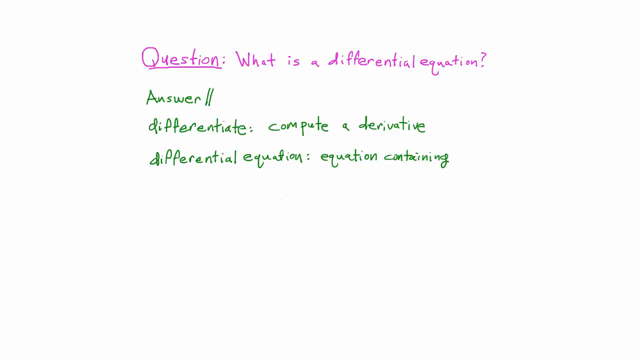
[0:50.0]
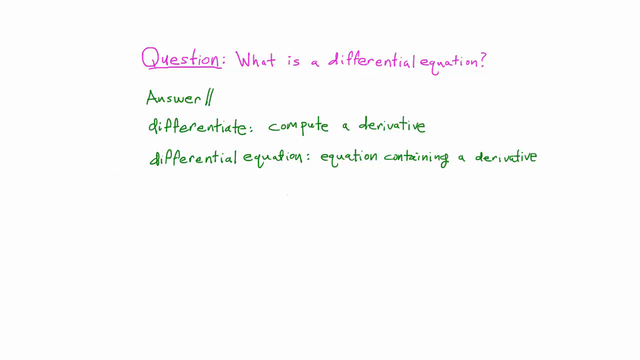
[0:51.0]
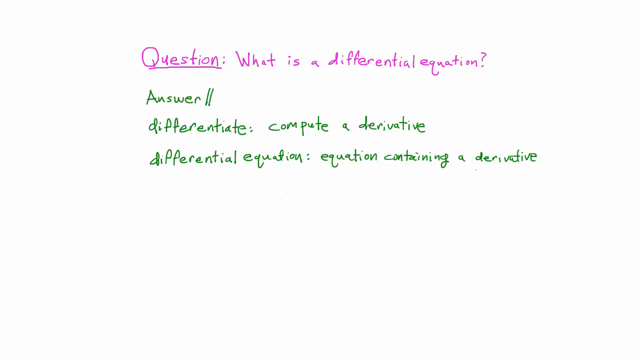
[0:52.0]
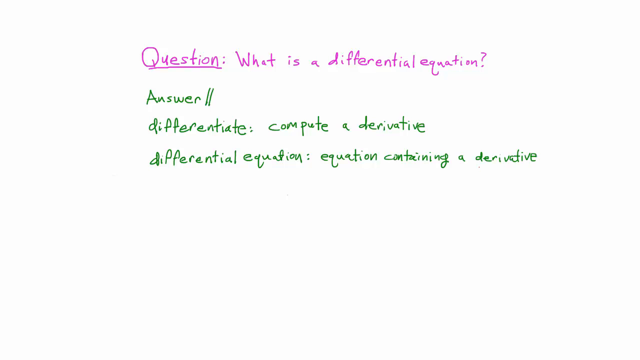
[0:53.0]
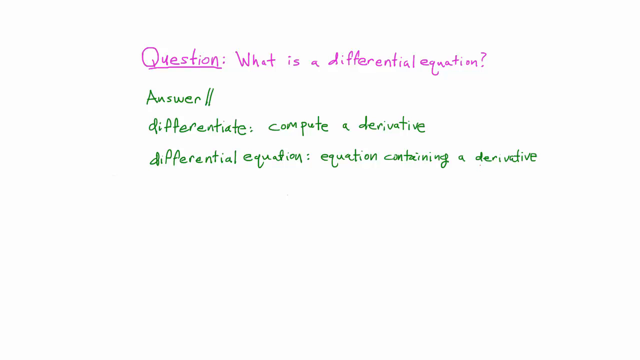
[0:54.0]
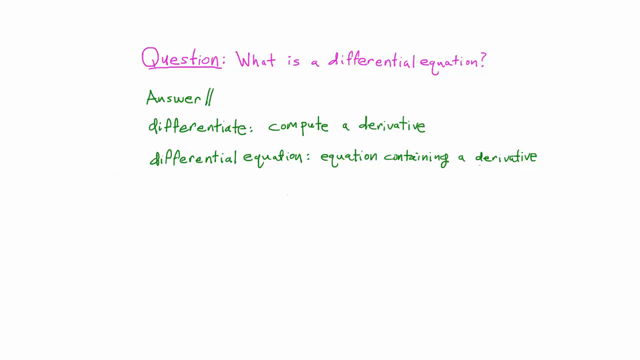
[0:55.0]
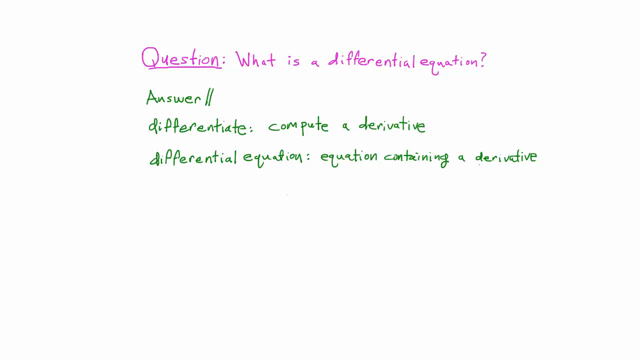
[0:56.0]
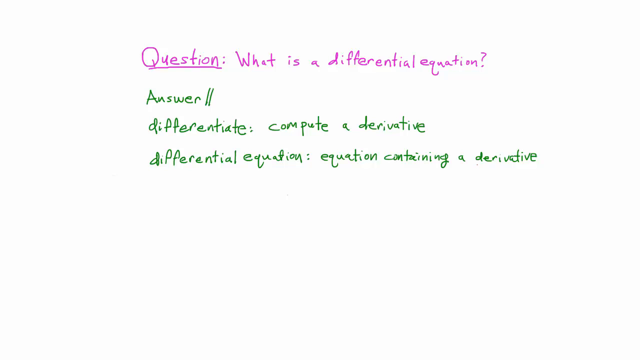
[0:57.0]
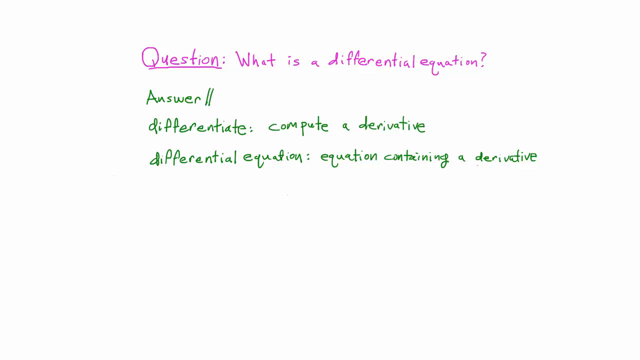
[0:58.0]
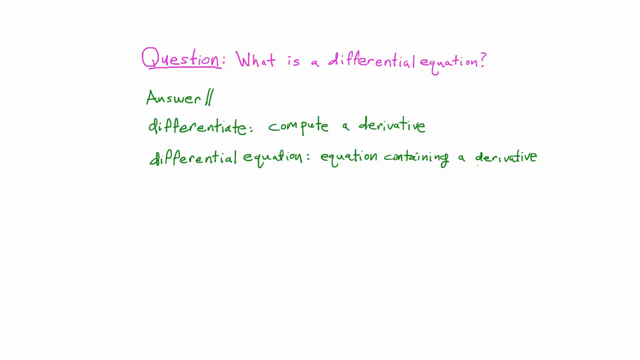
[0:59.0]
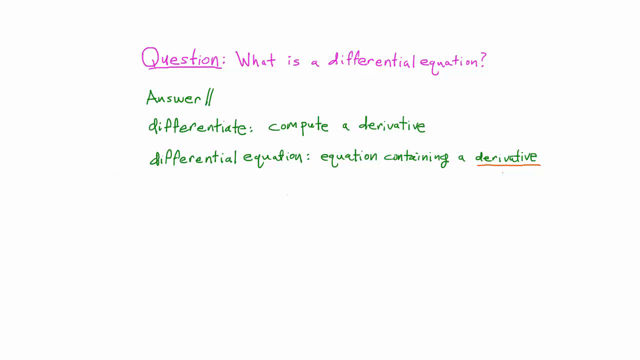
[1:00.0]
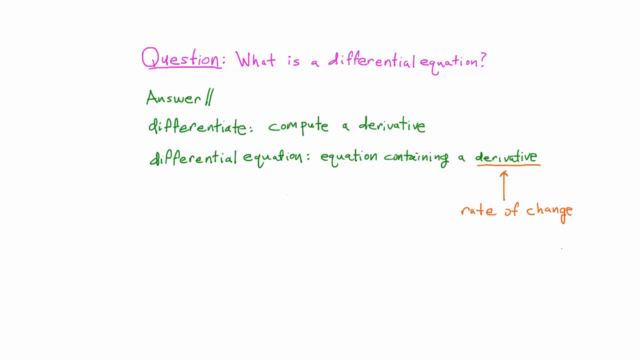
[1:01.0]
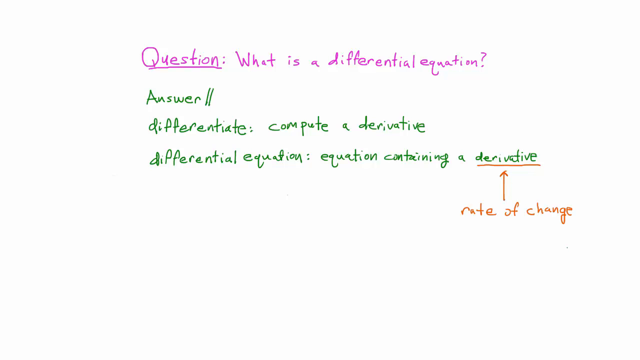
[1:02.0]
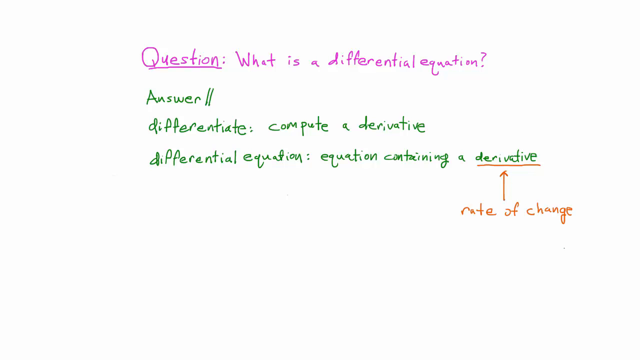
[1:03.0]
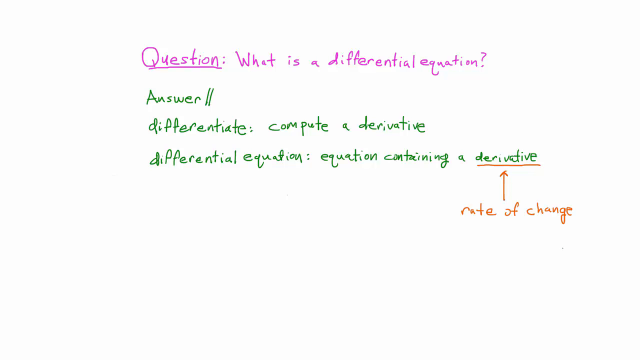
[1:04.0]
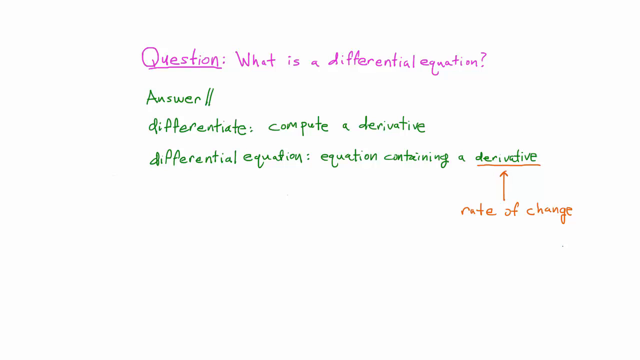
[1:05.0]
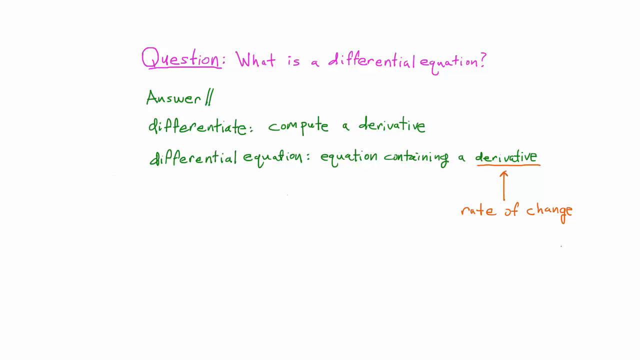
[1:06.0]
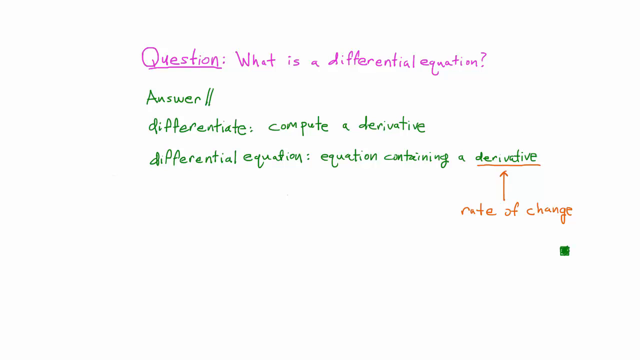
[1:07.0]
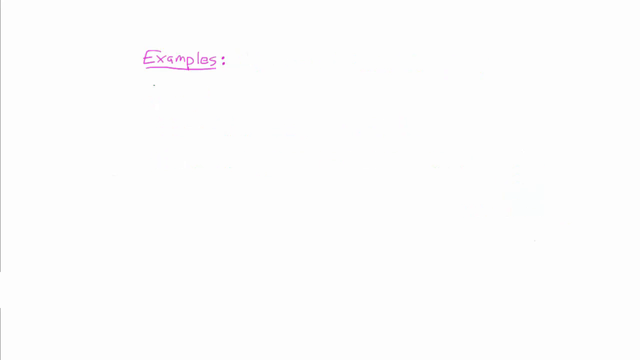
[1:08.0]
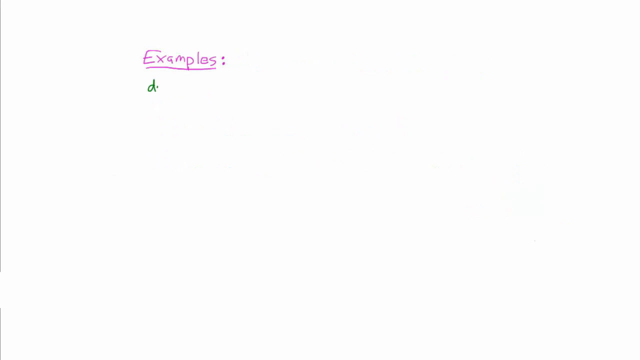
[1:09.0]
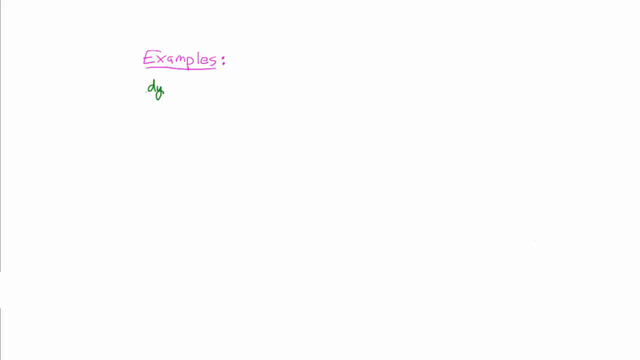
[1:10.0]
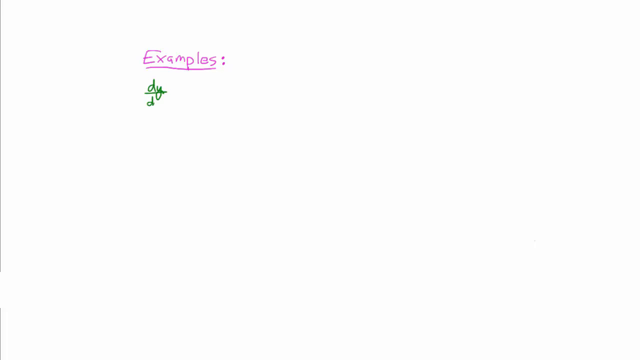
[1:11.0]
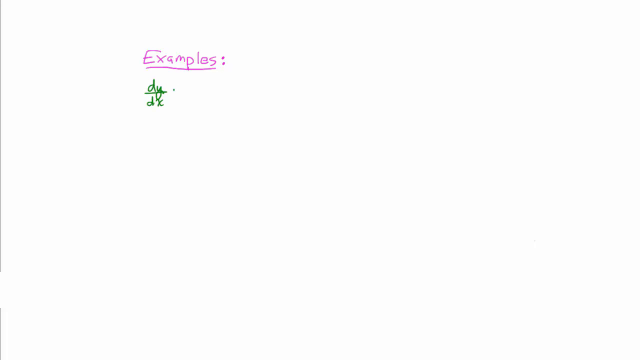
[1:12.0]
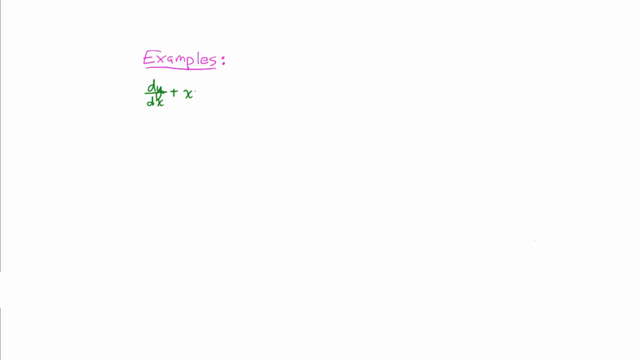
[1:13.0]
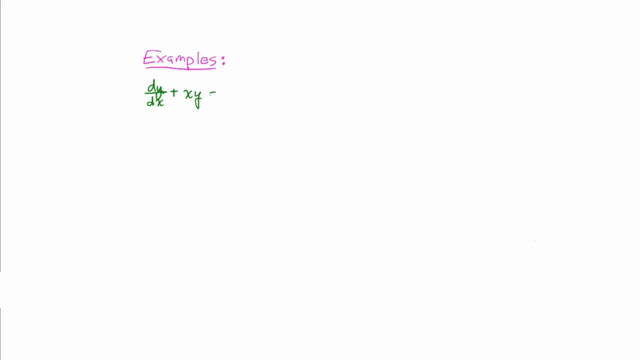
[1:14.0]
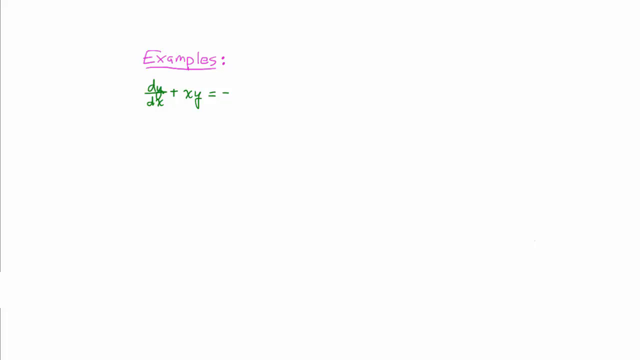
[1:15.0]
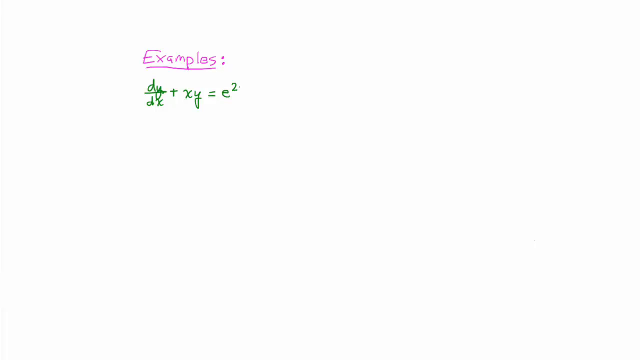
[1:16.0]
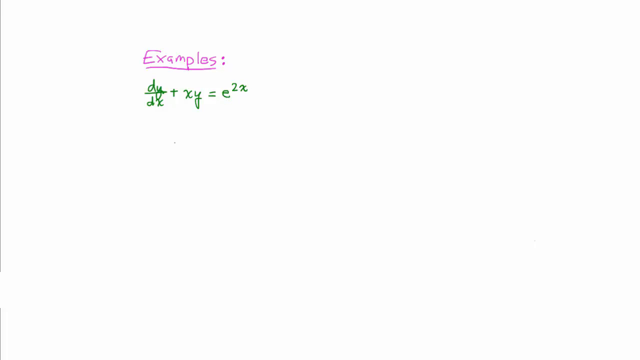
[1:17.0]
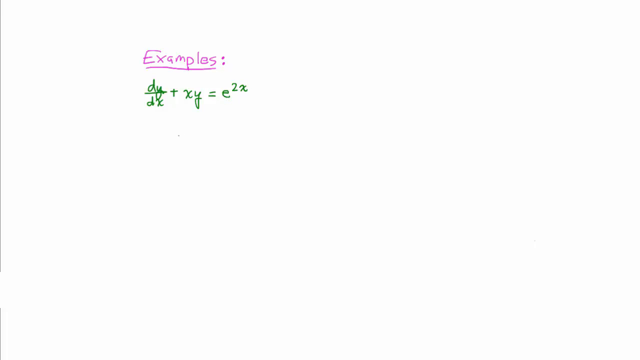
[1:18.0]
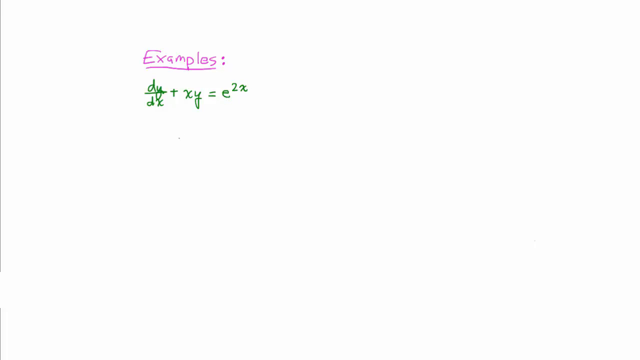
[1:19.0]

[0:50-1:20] On a white background, the writing so far is lined up fairly centrally, about an inch from the top and about two and a half inches from both the left and right sides. At the top, in purple and underlined, is "question," and out from it "what is that differential equation?" Below that, lined up under "question," is "answer" followed by two straight vertical lines. Under that is "differentiate, compute a derivative," and below that "differential equation, equation containing a derivative." There is a red line under "derivative." Below that, a red arrow about an inch long points up, and below it "rate of change" is written in red. The video then goes to a new screen. At the top, in purple, "examples" is written and underlined in purple. Right below it, in green, "dy over dx plus xy equals e squared" is written, with an x beside the 2 of the squared.